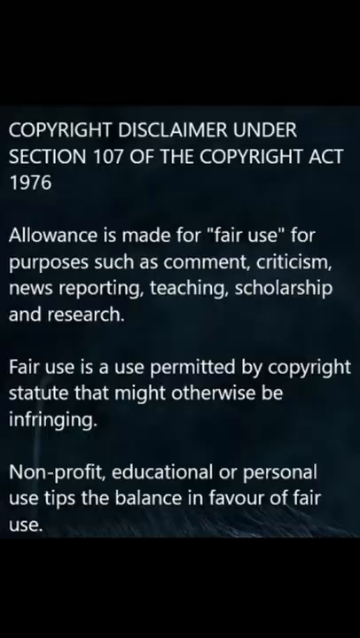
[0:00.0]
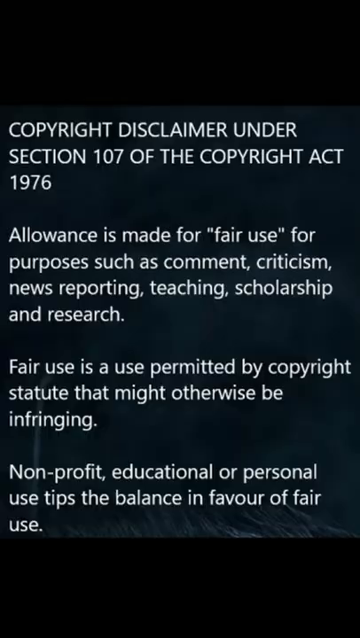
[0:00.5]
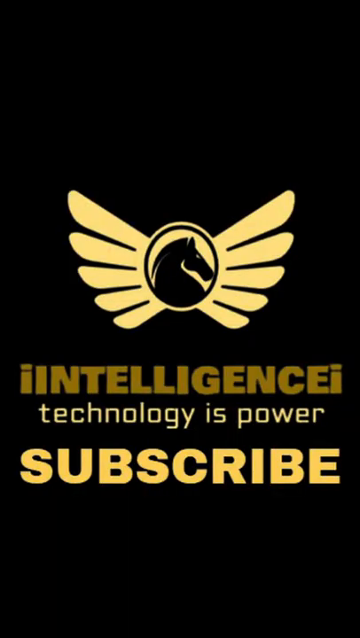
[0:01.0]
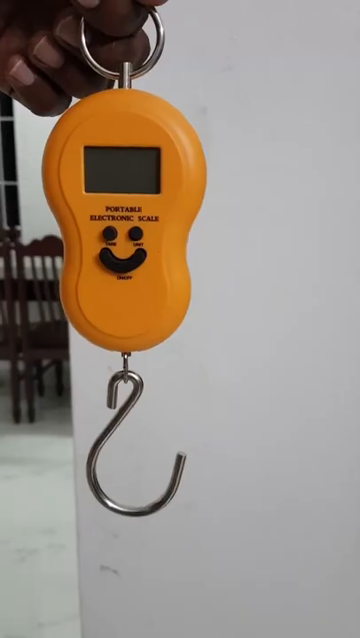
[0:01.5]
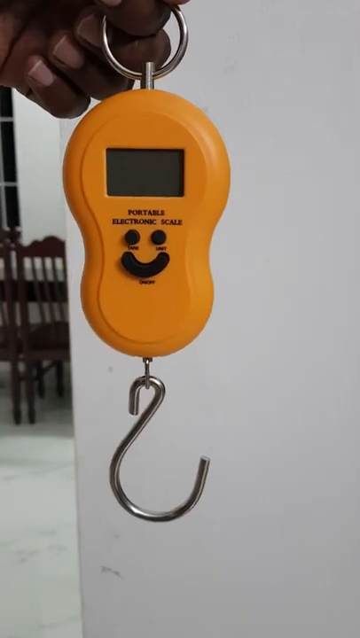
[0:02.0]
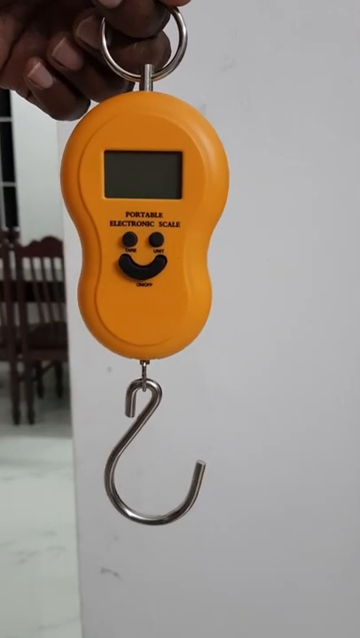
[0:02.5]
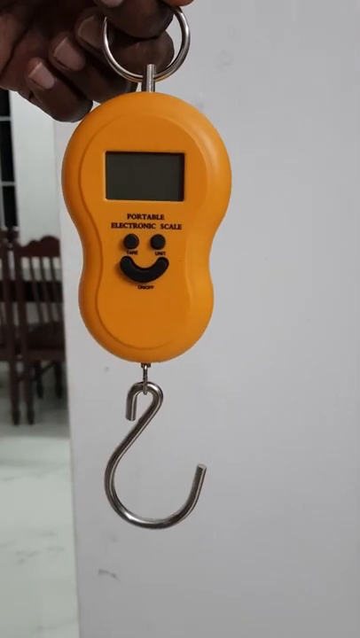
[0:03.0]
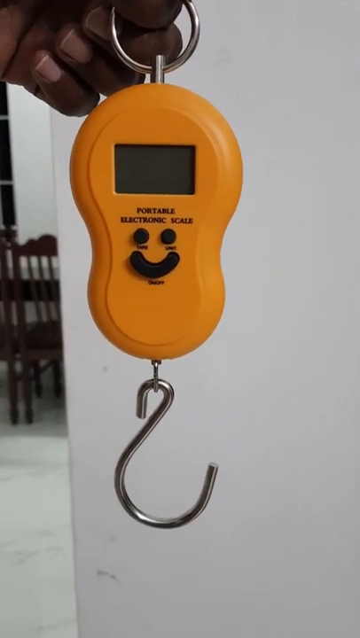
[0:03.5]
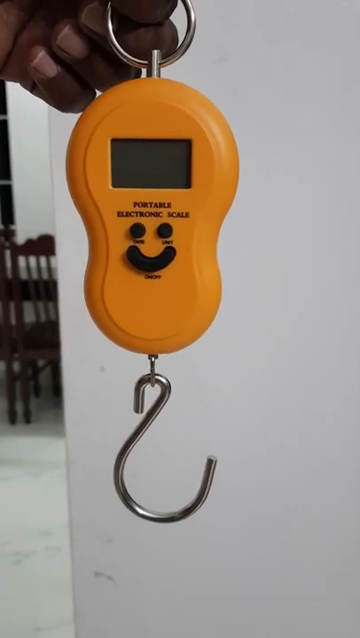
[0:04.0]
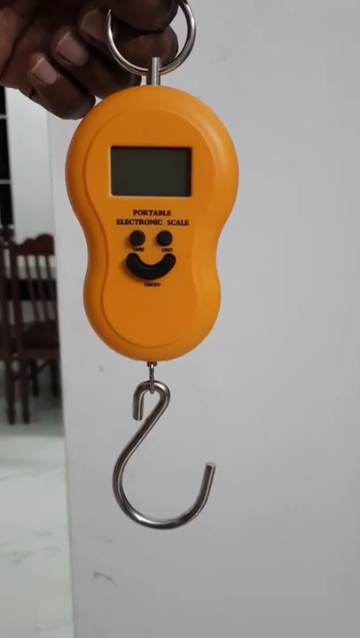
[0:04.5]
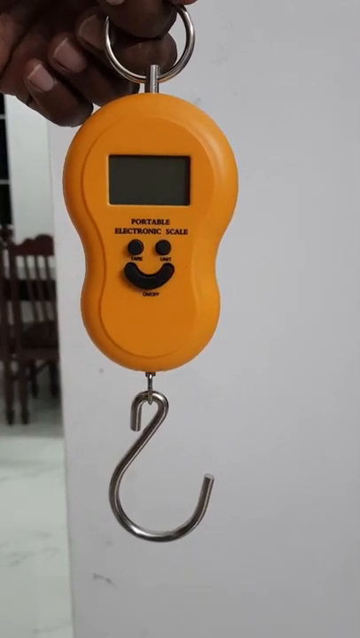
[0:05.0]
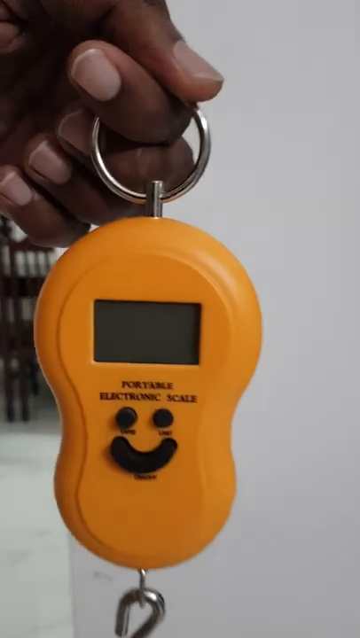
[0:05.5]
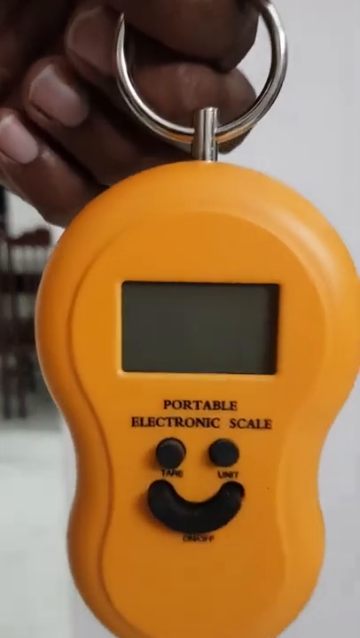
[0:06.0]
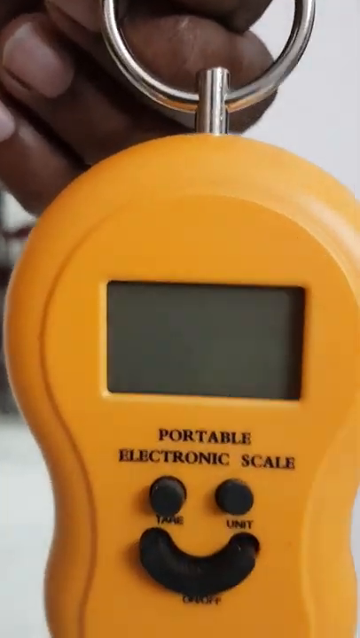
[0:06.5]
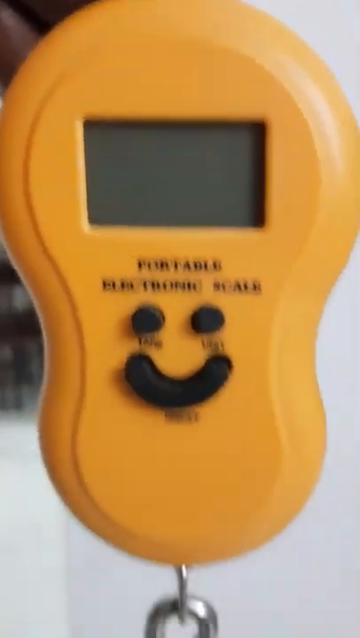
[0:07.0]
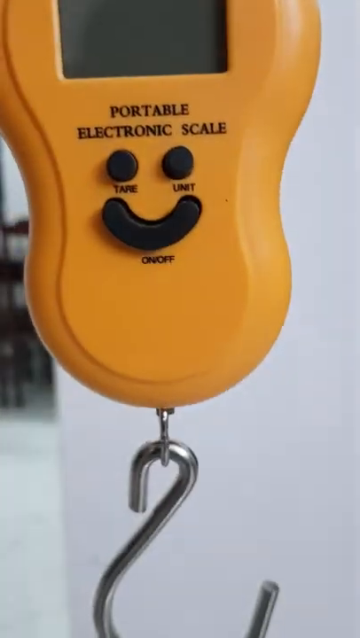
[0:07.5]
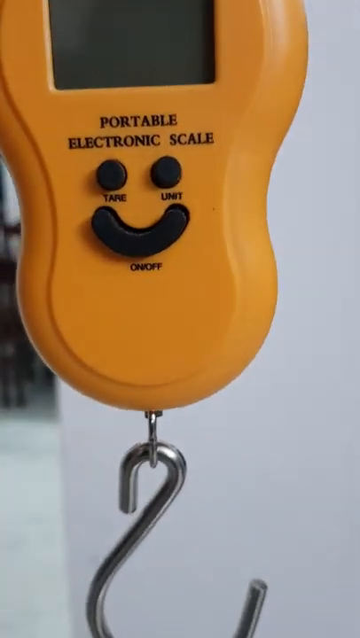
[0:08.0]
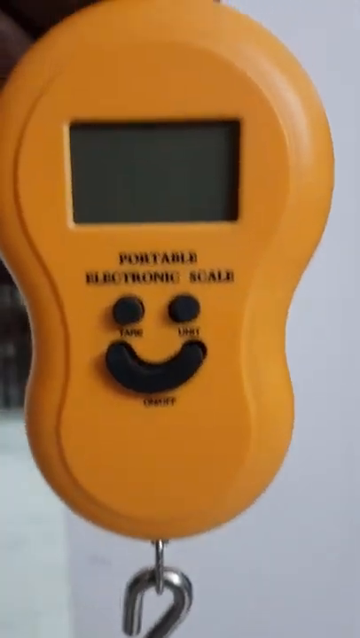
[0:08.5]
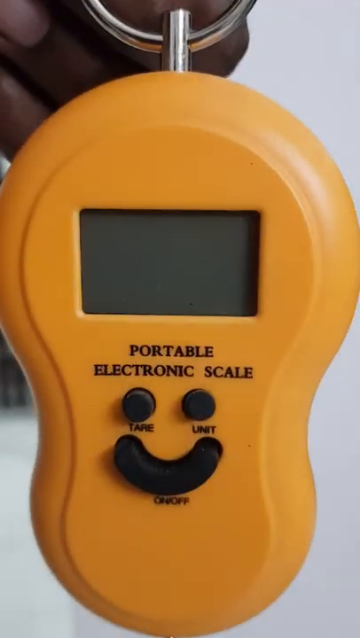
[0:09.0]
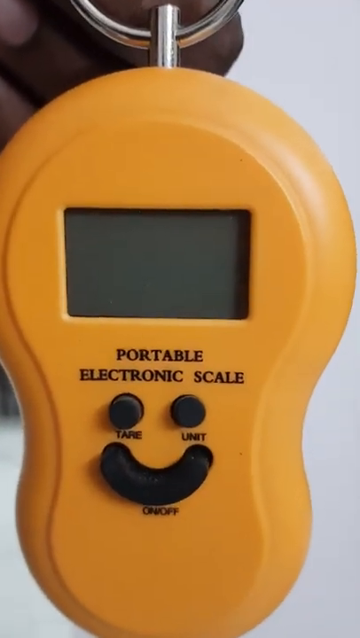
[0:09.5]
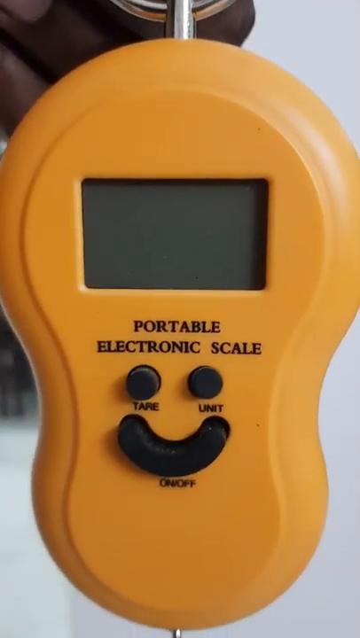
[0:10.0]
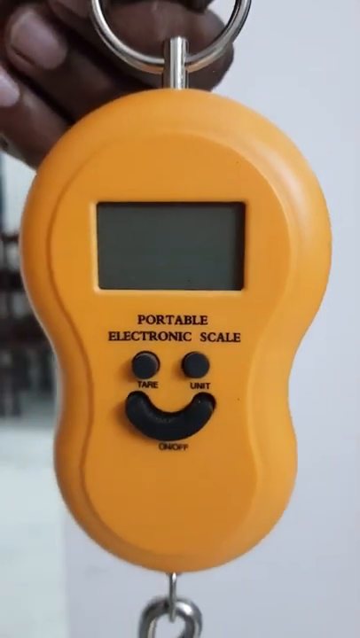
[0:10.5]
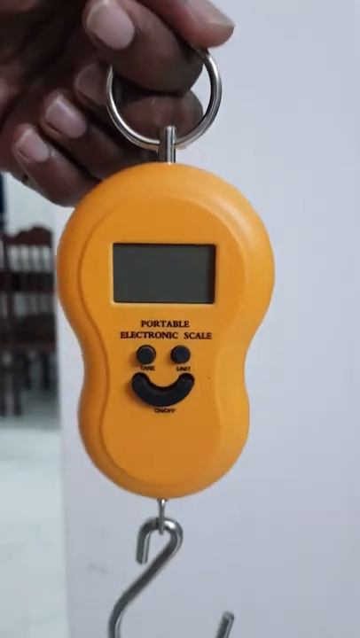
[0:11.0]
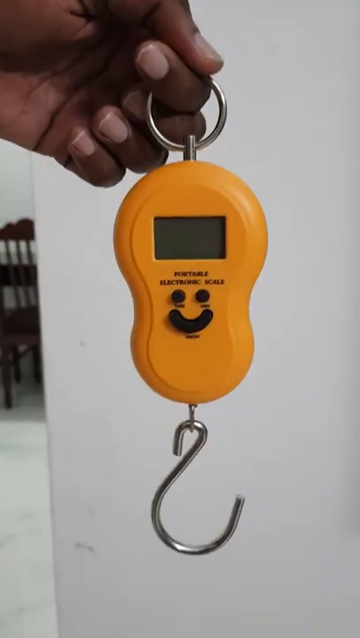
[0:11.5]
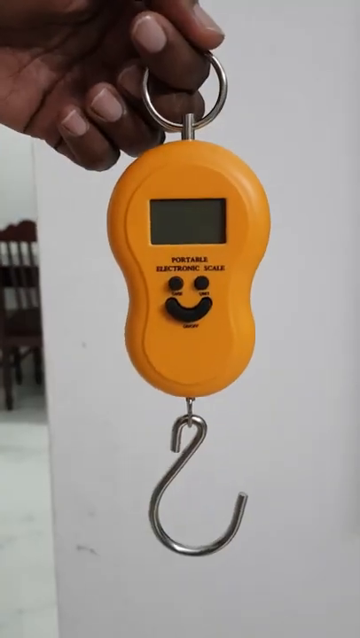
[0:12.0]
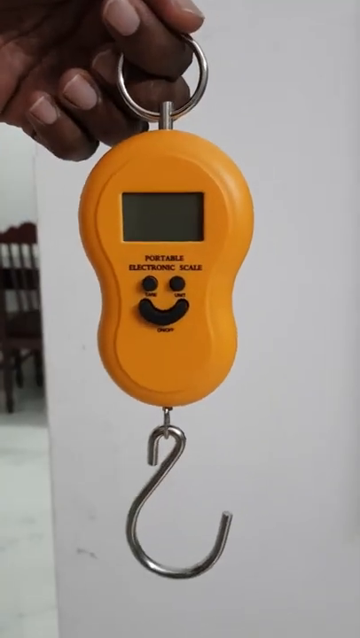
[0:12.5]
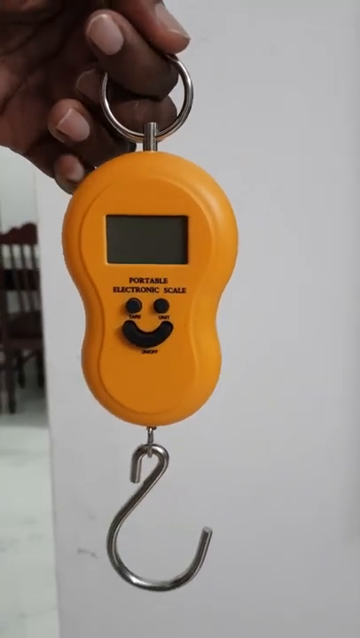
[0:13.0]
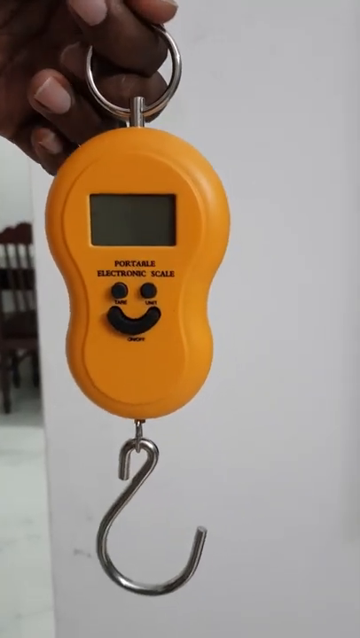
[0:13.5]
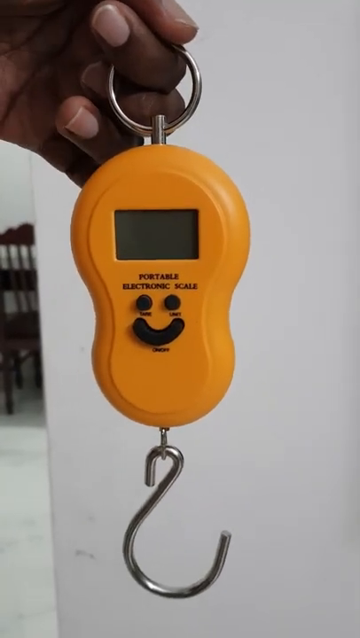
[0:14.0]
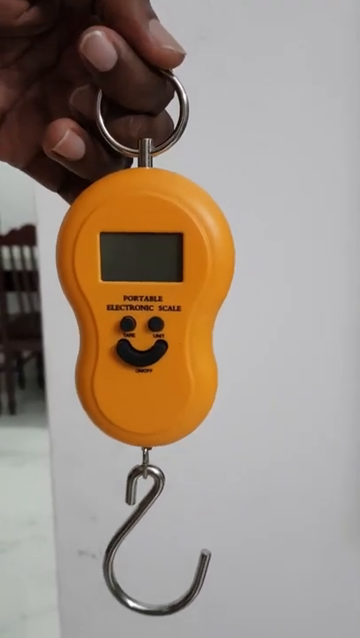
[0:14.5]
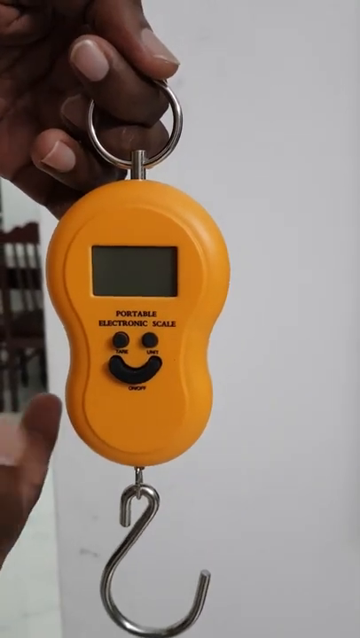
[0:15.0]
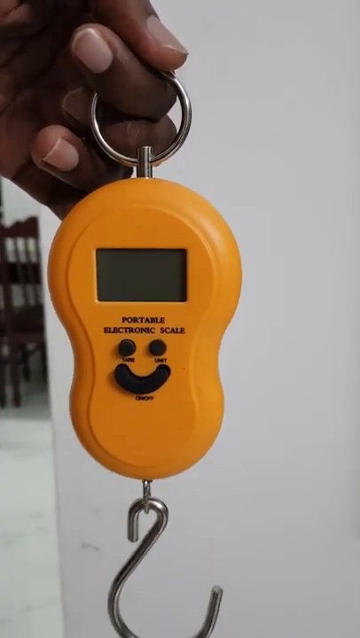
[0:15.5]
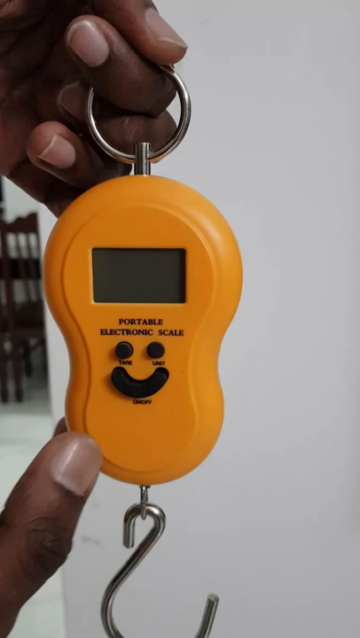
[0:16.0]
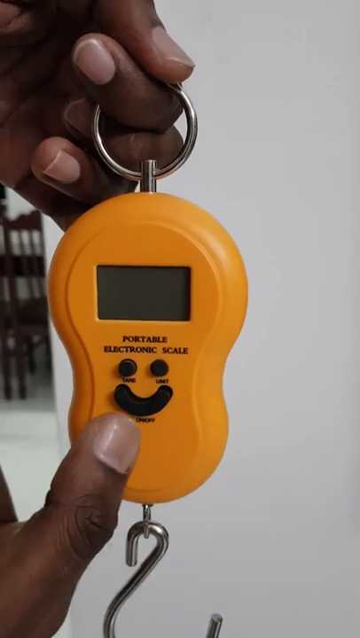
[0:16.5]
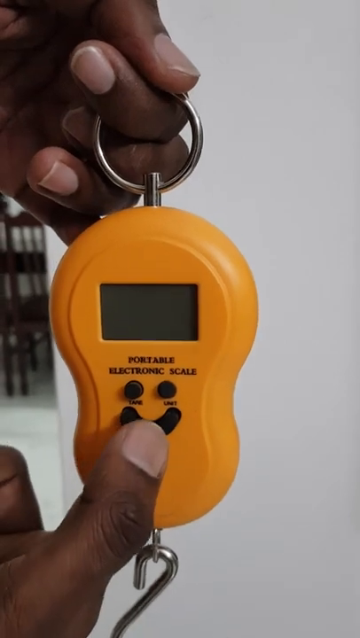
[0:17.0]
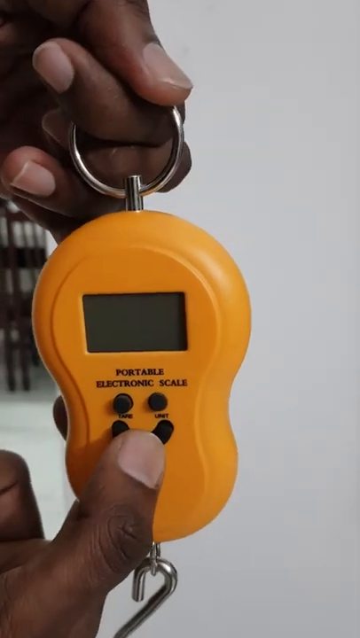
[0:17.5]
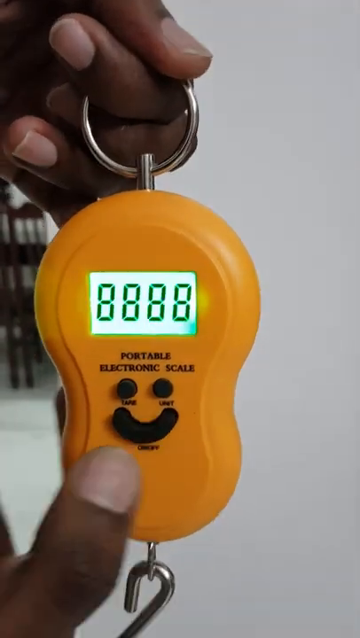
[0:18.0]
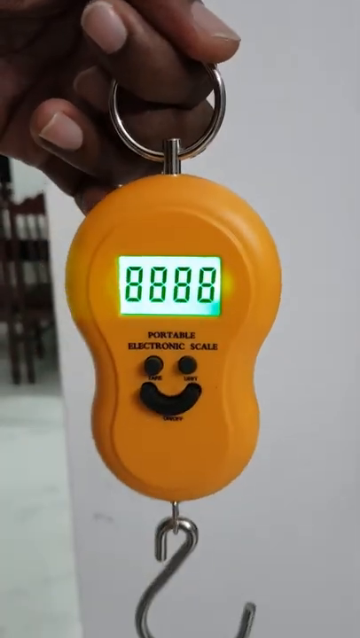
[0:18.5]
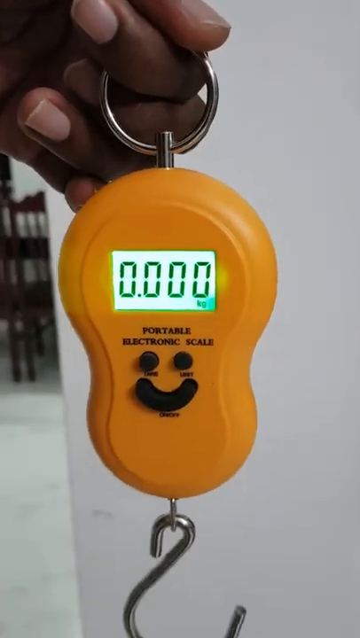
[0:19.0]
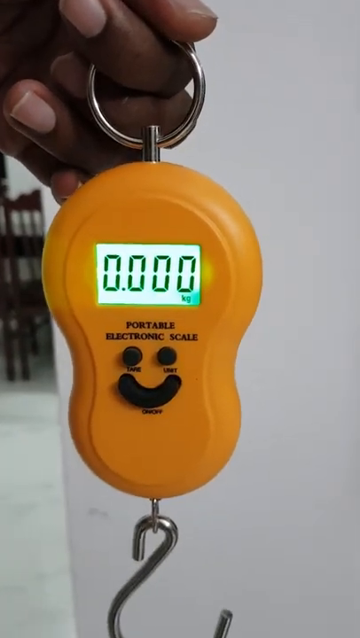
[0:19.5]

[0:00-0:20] A person holds a handheld scale in their hand in an instructional video. The name on the scale reads "portable electronic scale," and below that are the labels "unit" and "tare," with another word underneath that is unreadable. Nothing is attached to the scale yet. The person pushes the lower button, which turns on the LED screen. Text then appears on the screen giving a copyright disclaimer, stating that the video is for fair use and that the clips used are fair use.